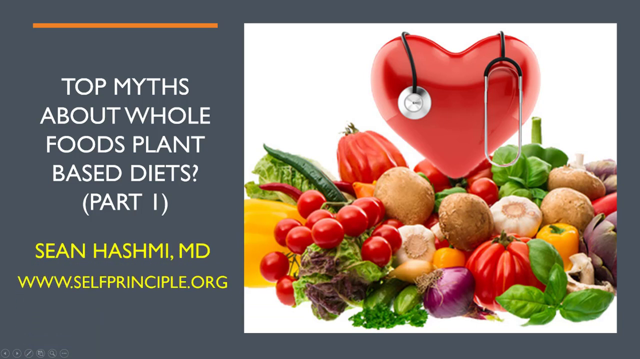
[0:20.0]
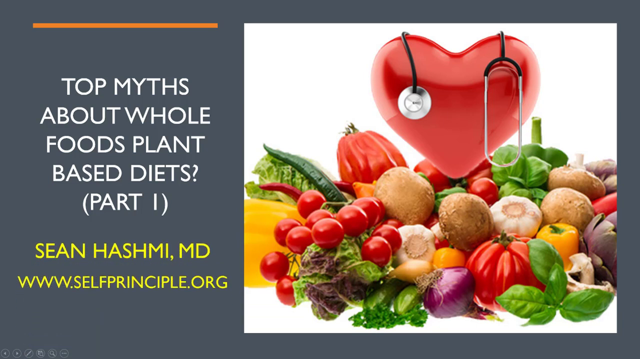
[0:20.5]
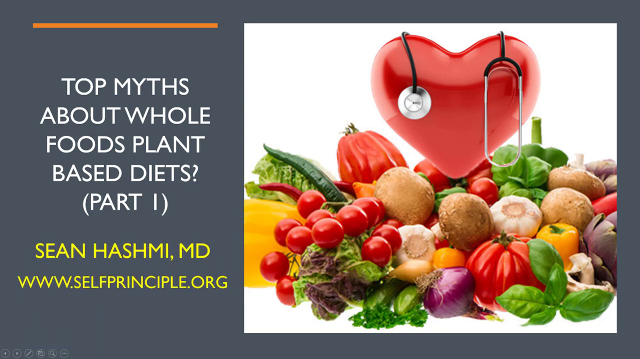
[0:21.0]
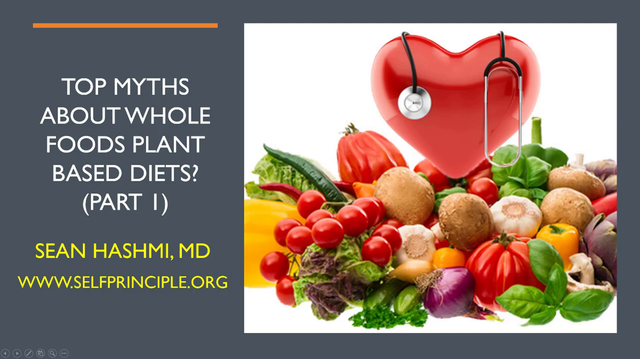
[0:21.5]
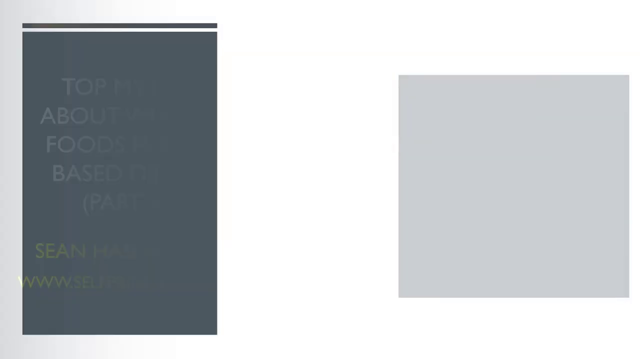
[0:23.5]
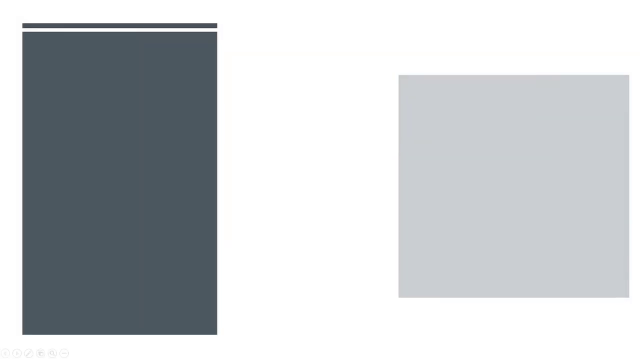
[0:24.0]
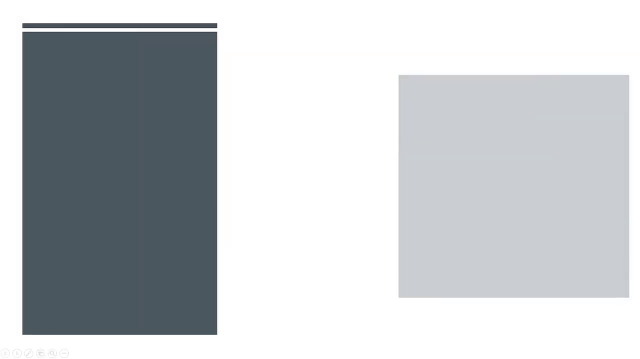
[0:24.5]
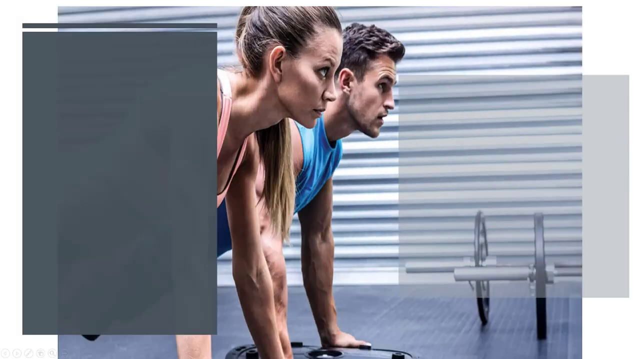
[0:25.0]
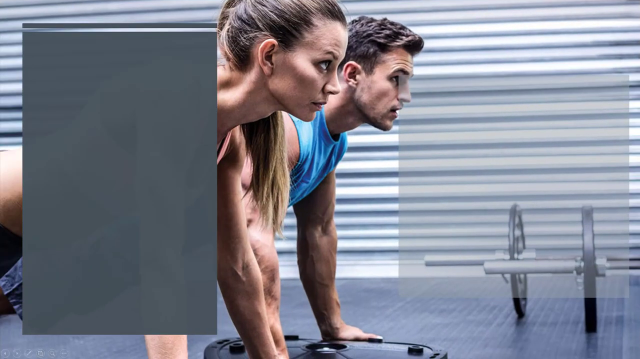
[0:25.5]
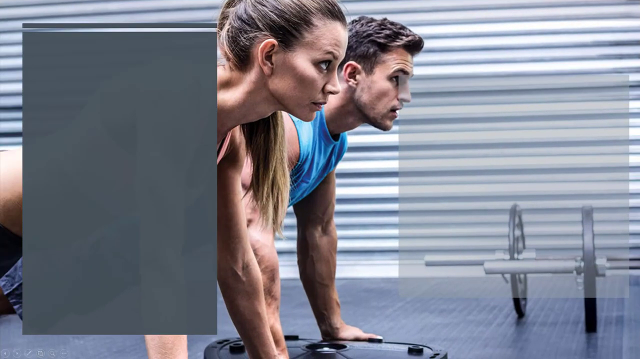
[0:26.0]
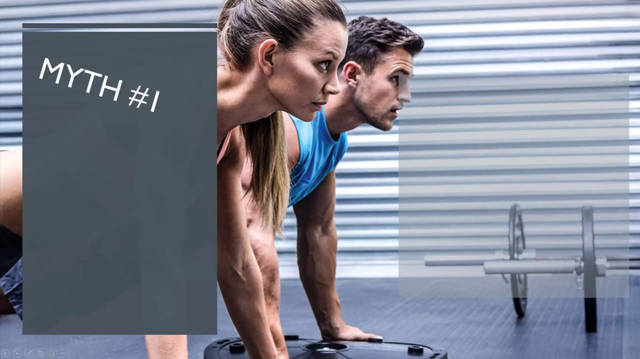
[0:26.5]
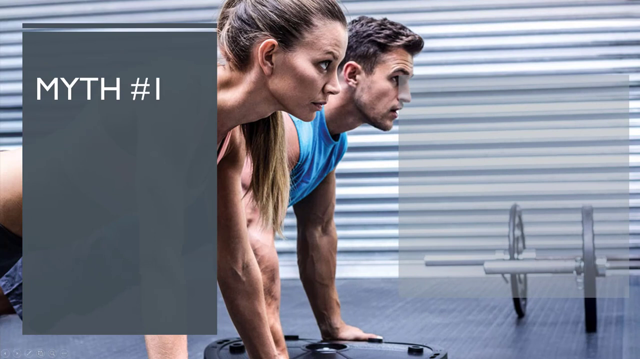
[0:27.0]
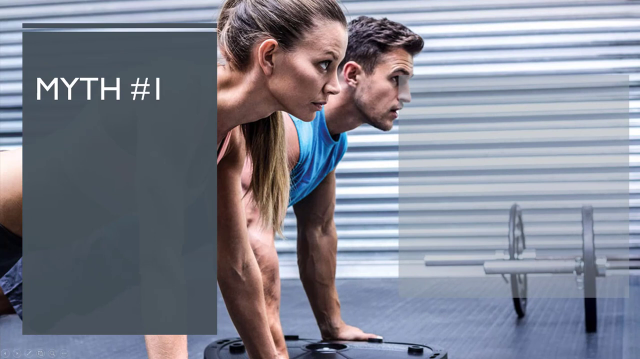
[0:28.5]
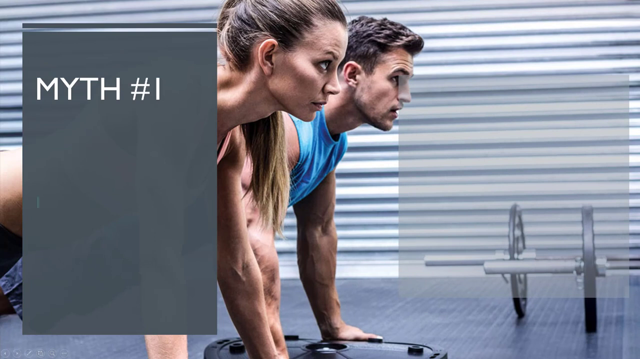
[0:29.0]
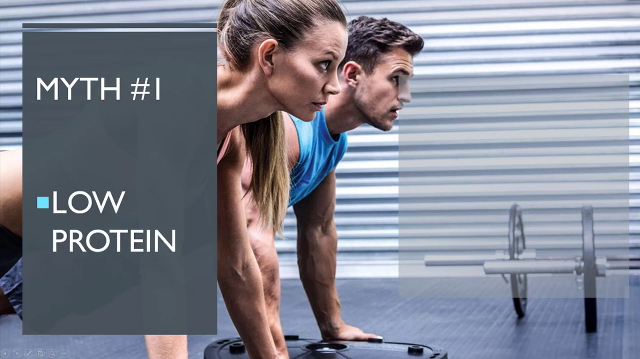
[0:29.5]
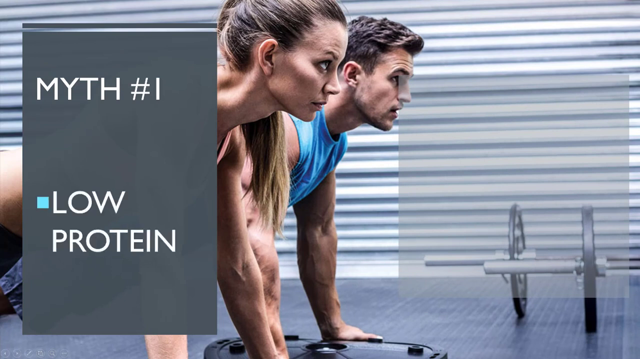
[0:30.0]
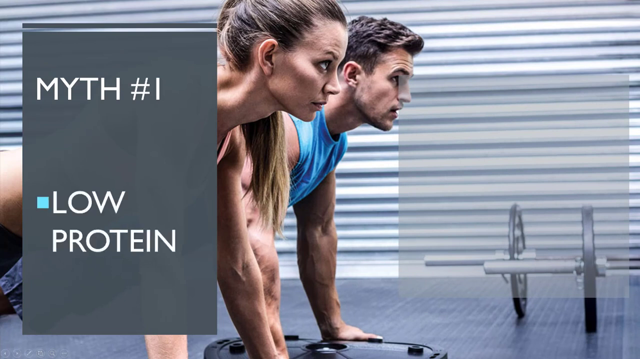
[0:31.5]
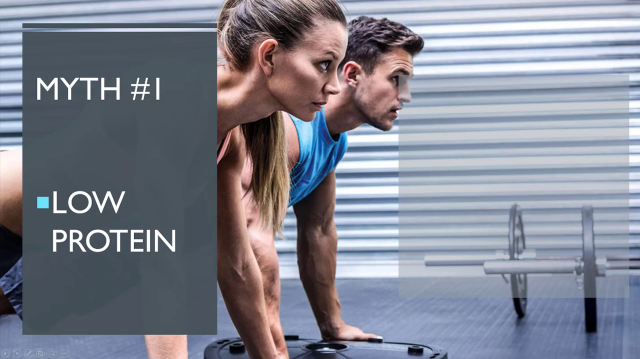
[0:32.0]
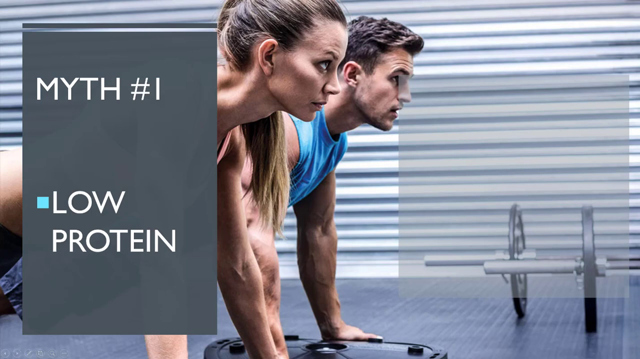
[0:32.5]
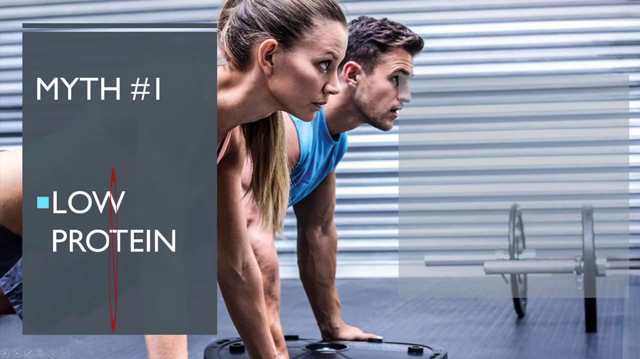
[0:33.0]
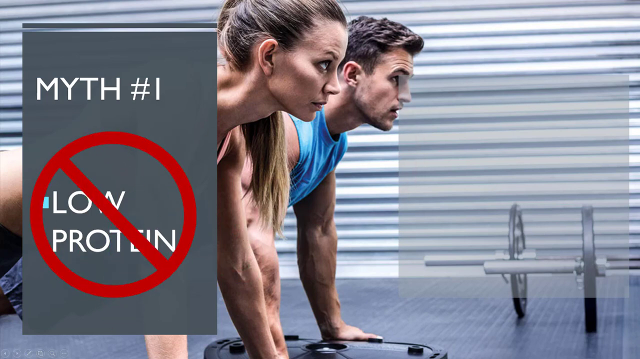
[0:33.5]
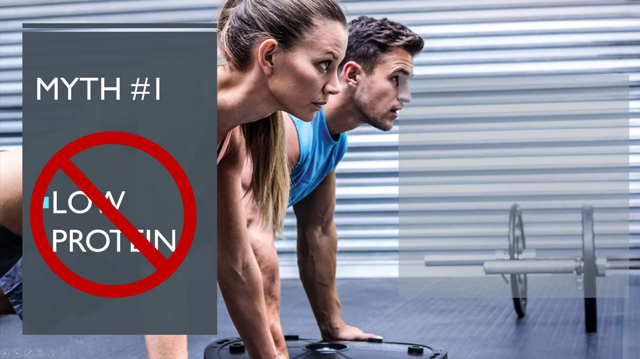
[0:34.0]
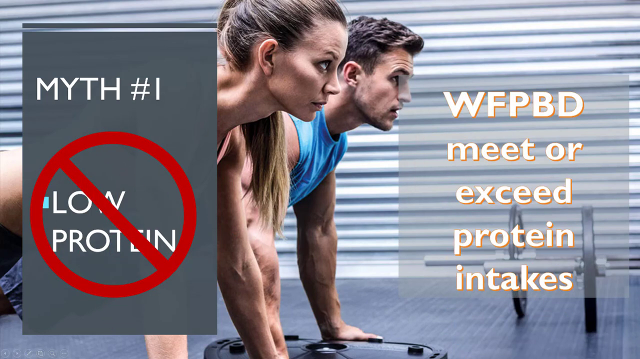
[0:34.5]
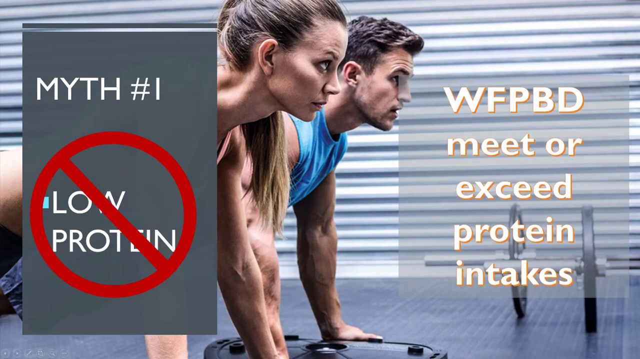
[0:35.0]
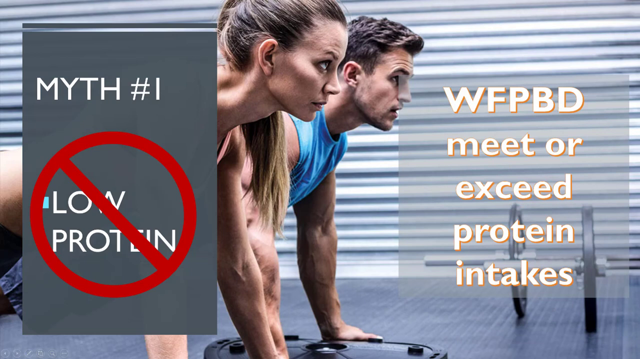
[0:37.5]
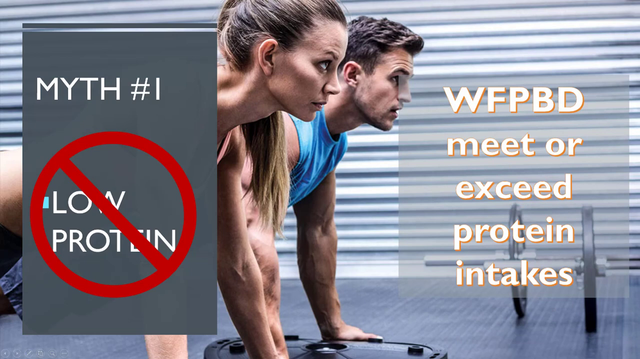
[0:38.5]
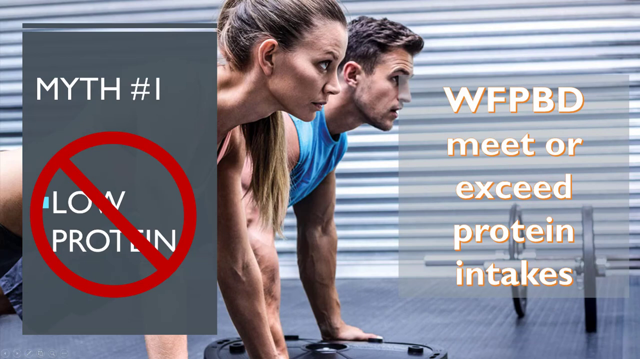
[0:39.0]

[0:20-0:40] A doctor's name, "Sean Hashimi, MD," is listed at the bottom left in yellow font, with the website "www.selfprinciple.org" underneath. The text and picture fade away to a stock photograph of a man in a blue tank top and a woman in a pink shirt exercising while looking forward. Text pops up on the left side reading "myth number one, low protein," and an animation places a red circle with a line through it over the low protein text. On the right side, more text is revealed: "WFPBD meet or exceed protein intakes." The man and woman appear to be planking or doing push-ups in a closed room, with a set of weights and barbells off to the lower right side. The man has short brown hair, and the woman has brown and blonde hair in a ponytail.